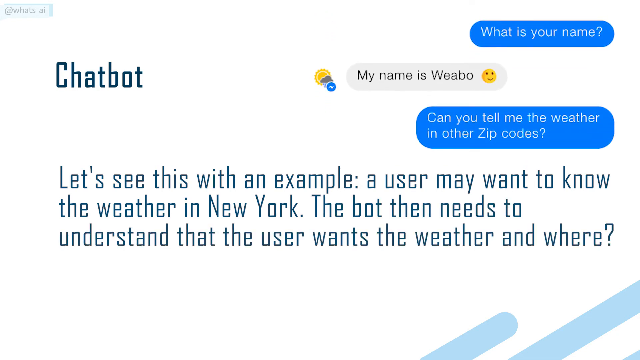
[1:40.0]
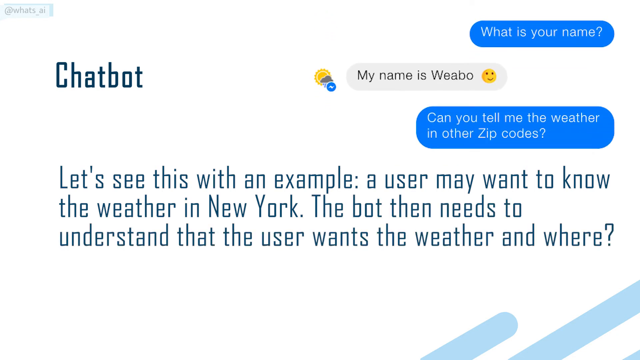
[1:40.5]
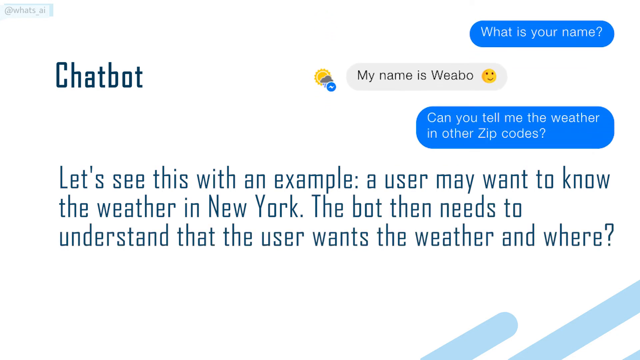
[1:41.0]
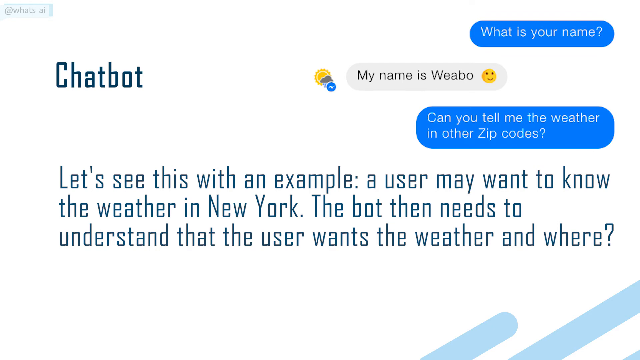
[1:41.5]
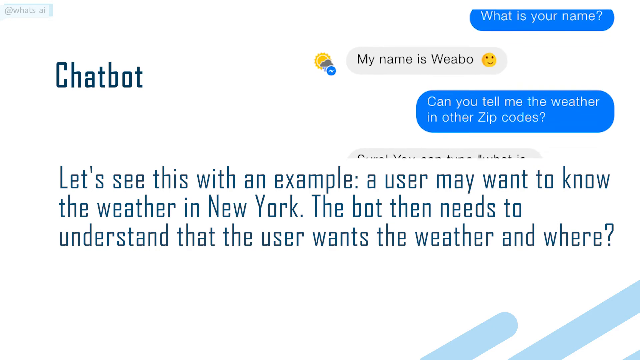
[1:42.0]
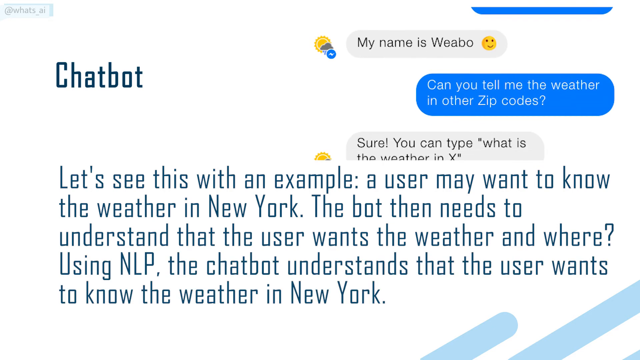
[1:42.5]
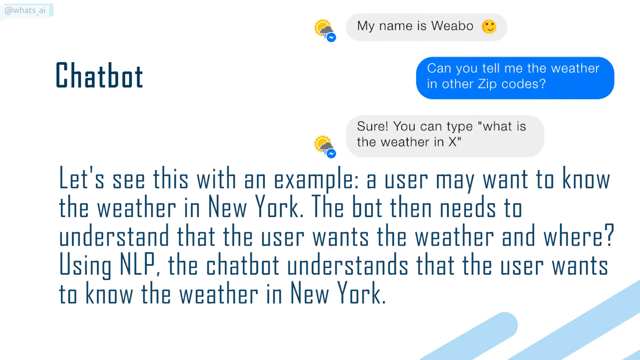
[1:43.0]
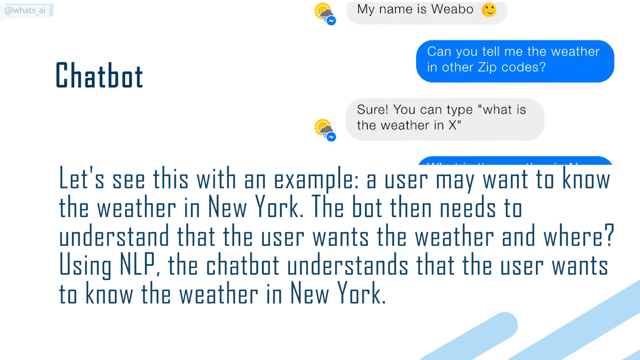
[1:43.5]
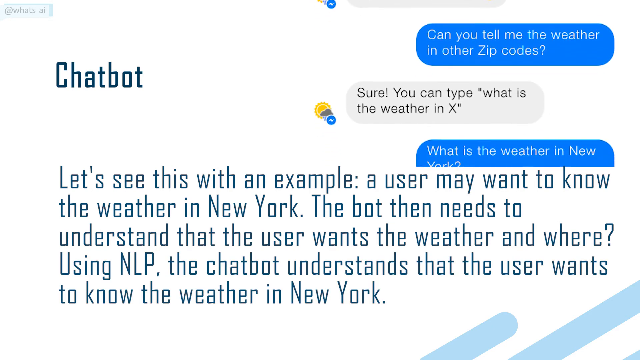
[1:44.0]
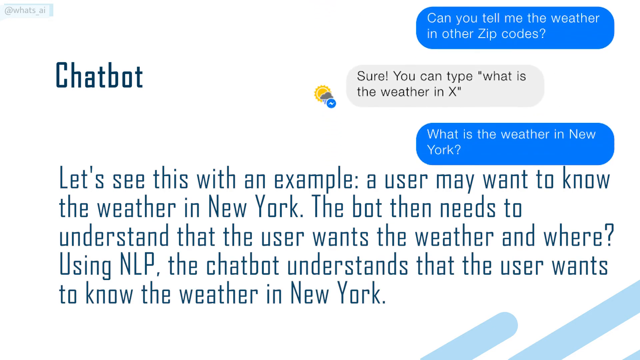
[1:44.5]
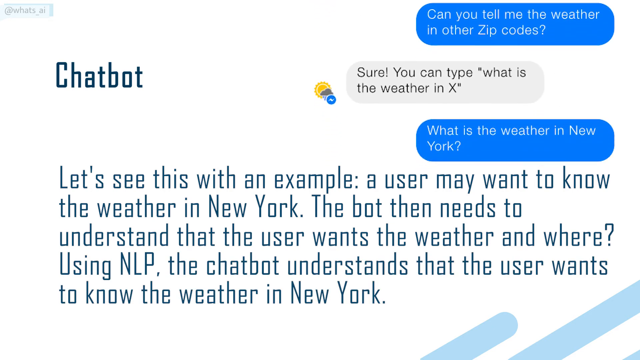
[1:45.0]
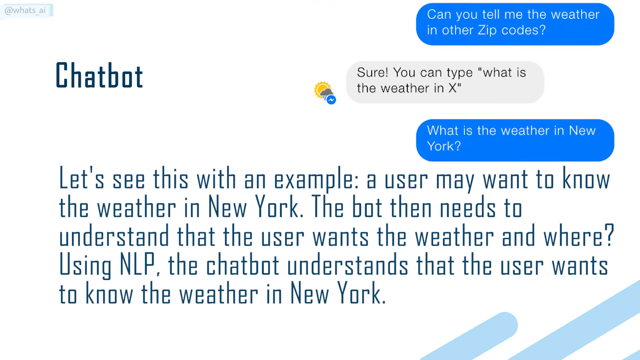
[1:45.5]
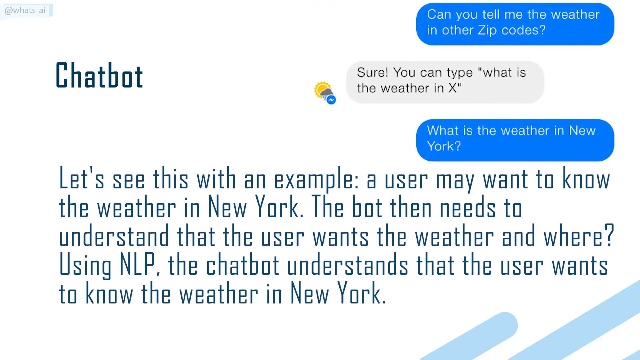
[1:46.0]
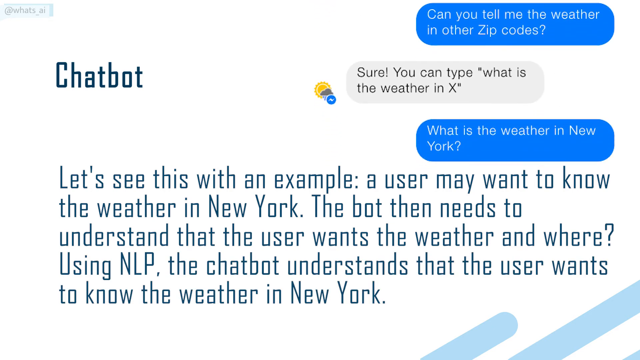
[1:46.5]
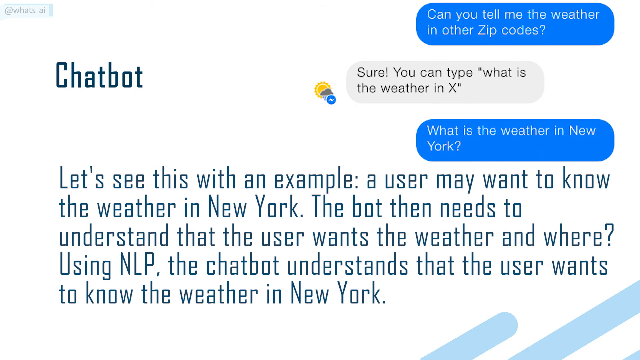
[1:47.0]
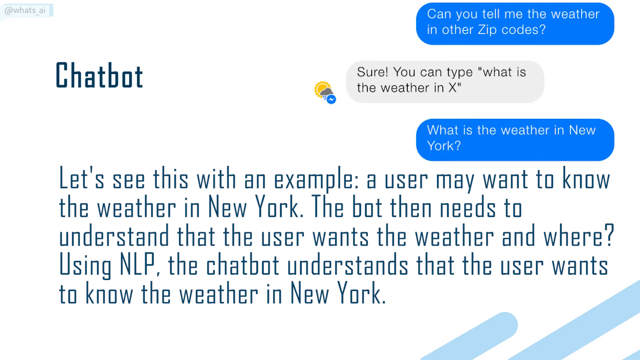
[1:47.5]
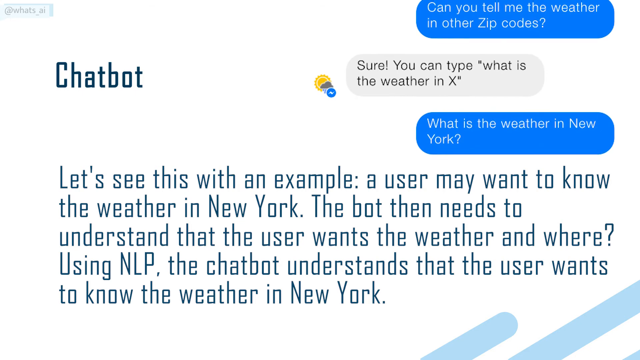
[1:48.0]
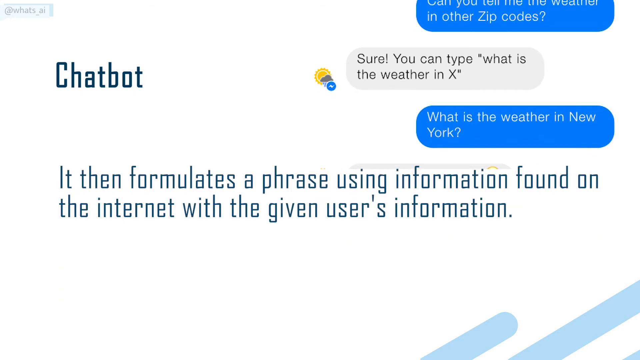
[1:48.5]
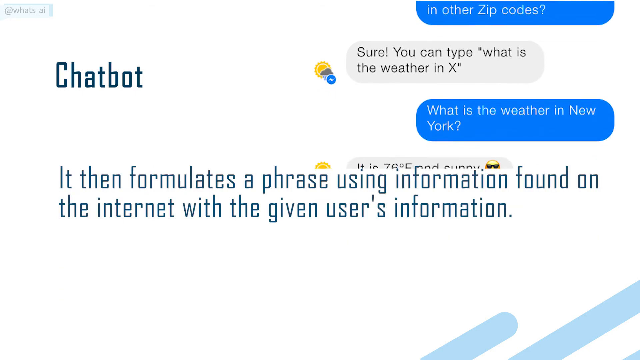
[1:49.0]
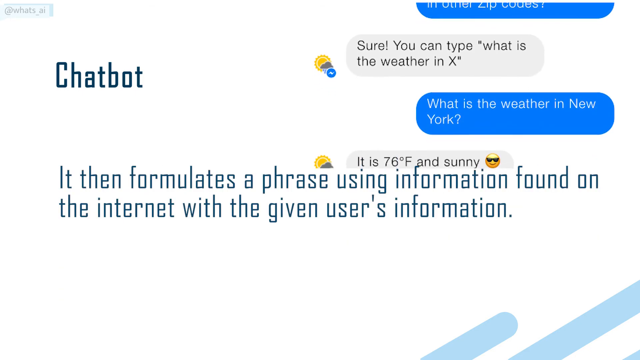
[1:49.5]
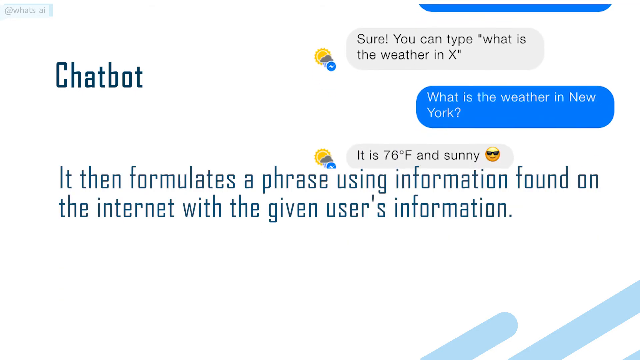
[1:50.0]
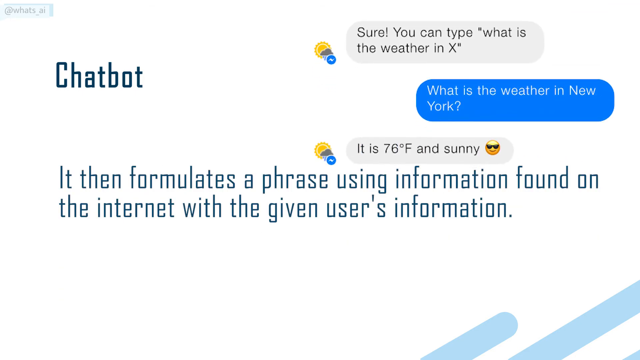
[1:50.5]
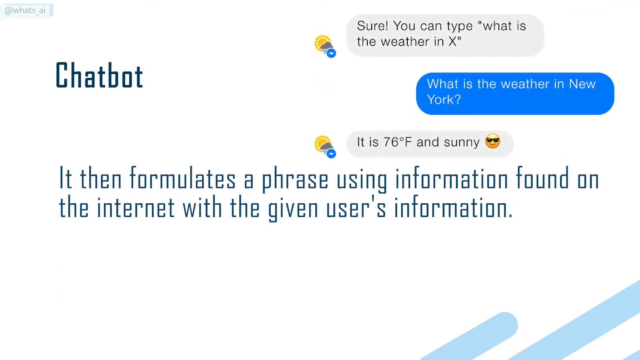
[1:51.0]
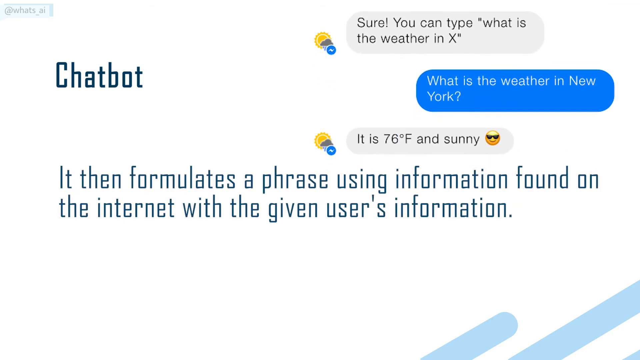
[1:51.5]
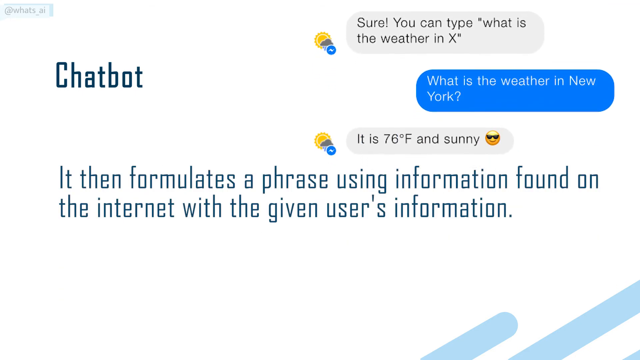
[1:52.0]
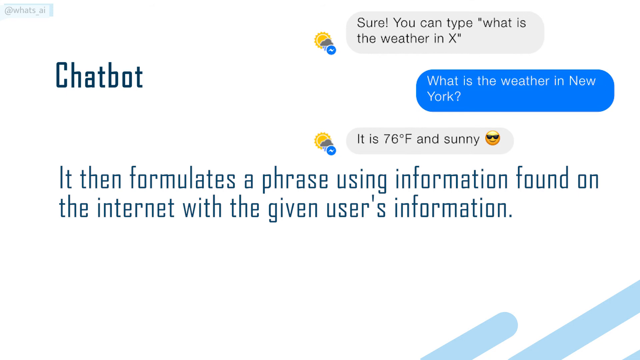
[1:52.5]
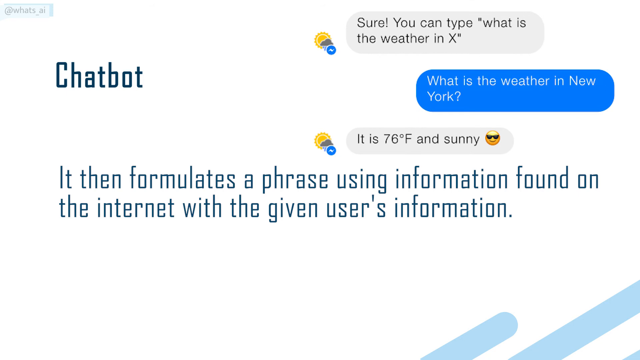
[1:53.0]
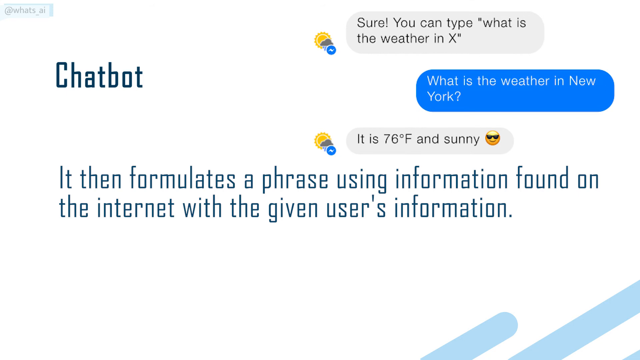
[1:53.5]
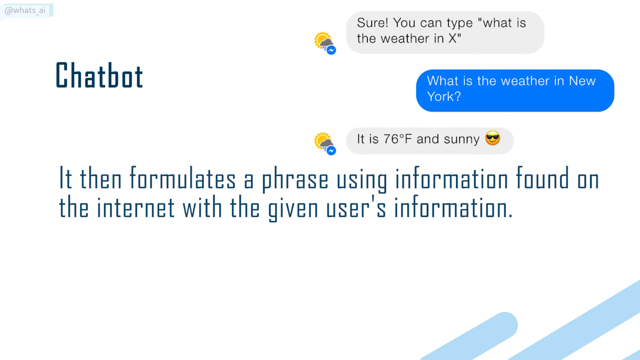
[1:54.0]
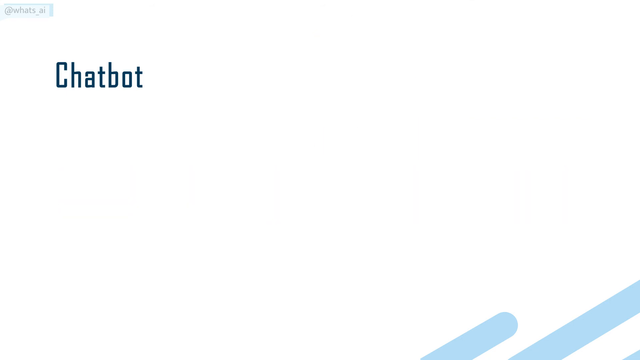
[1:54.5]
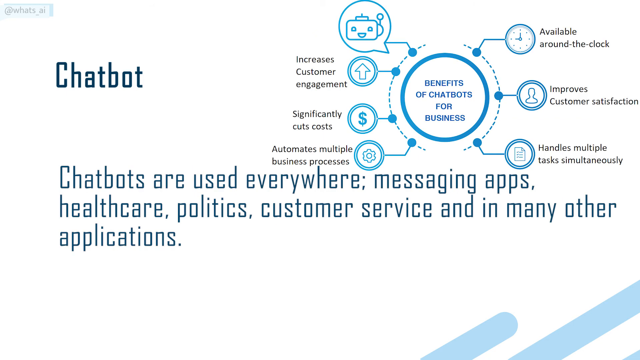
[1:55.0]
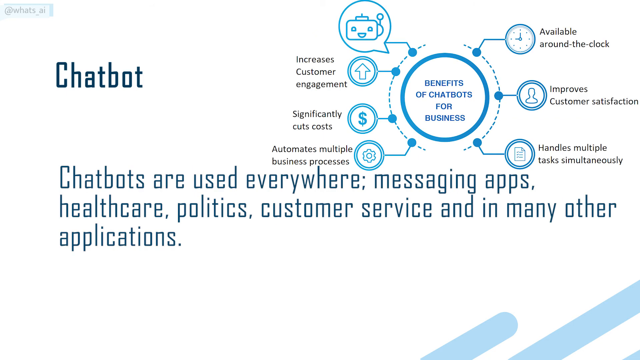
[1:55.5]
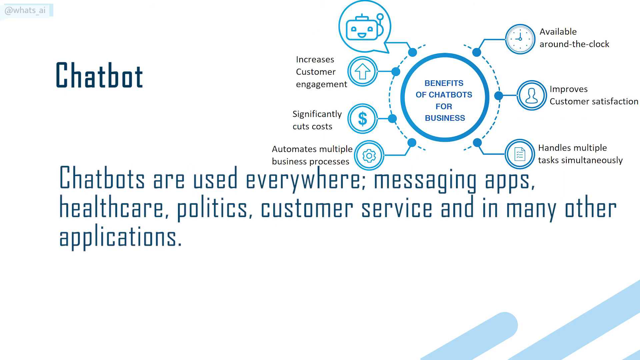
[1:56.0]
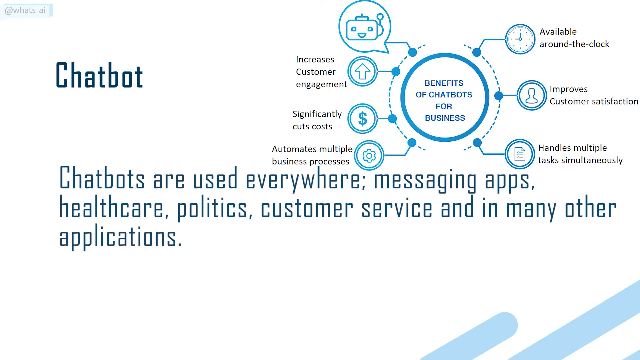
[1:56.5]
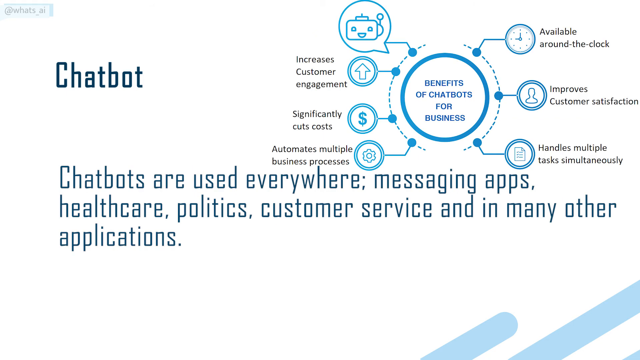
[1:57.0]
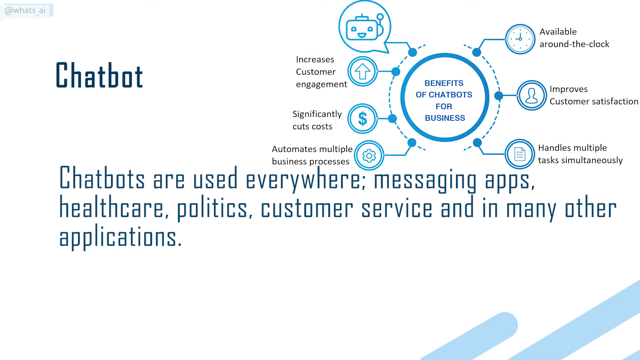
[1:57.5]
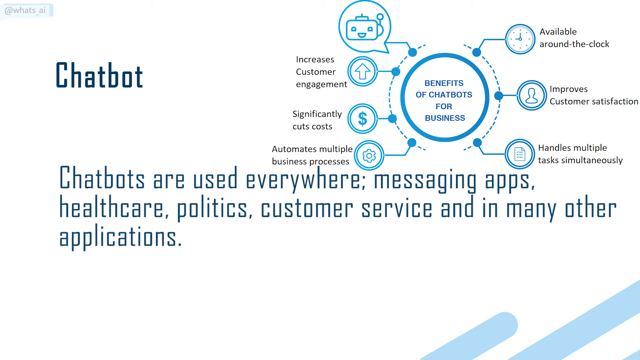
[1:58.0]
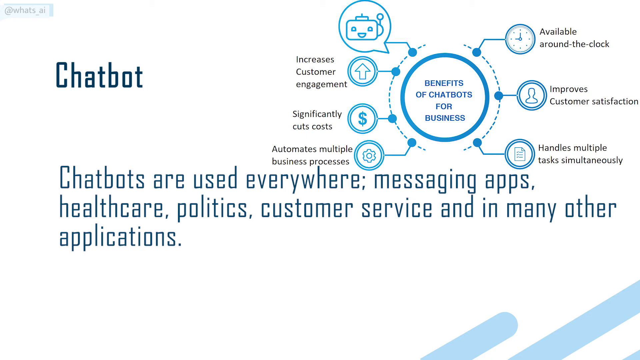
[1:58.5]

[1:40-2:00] A conversation goes on in the upper right-hand corner: the chatbot says its name is Weibo, with a smiley face, and the user asks whether it can tell the weather in other zip codes. It replies "sure. Can you type what is the weather in X?" and the person responds in blue, "What is the weather in New York?" As the conversation moves upwards, big words at the bottom say "it then formulates a phrase using information found on the Internet with the given user's information." In the small words at the top, the chatbot says "it is 76 degrees Fahrenheit and sunny," with an emoji of a smiley face wearing sunglasses. Then the text says "chatbots are used everywhere, messaging apps, health care, politics, customer service, and in many other applications." A diagram at the top shows these different areas under "benefits of chatbot for businesses," with four dots on the left and three on the right listing the benefits.